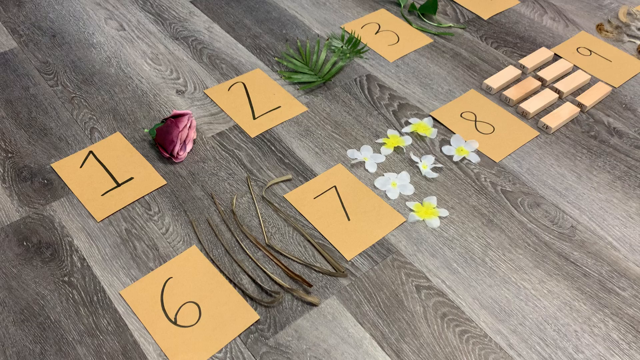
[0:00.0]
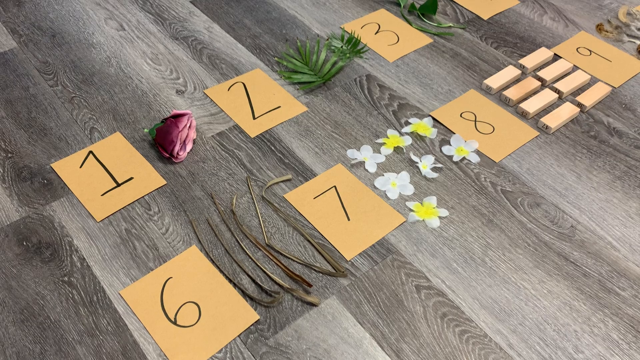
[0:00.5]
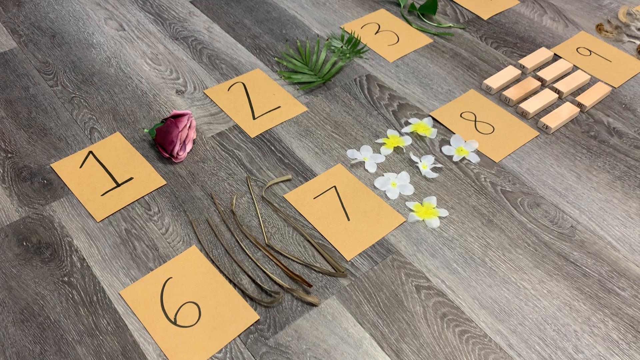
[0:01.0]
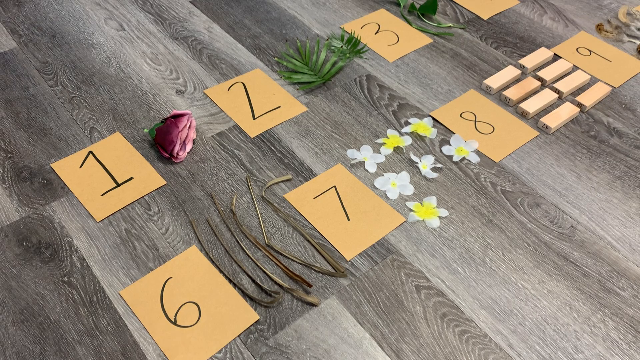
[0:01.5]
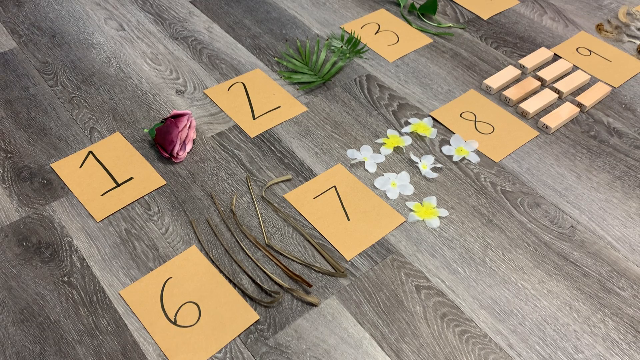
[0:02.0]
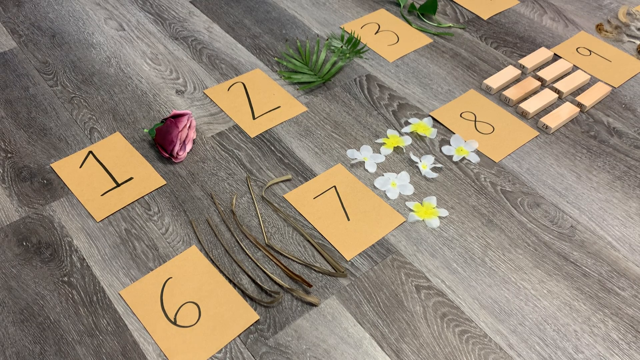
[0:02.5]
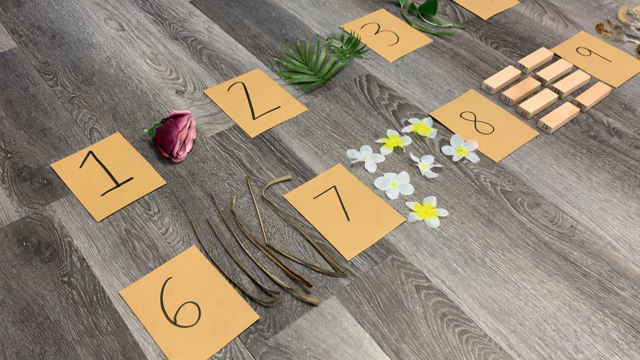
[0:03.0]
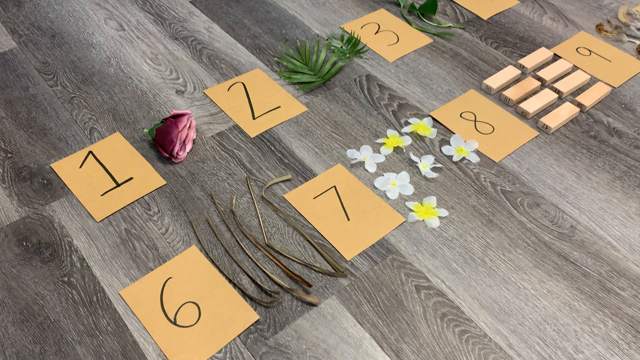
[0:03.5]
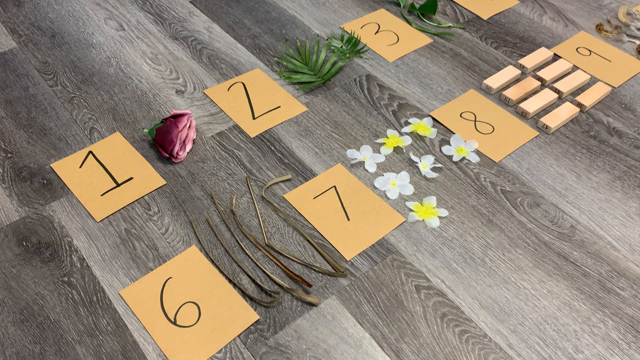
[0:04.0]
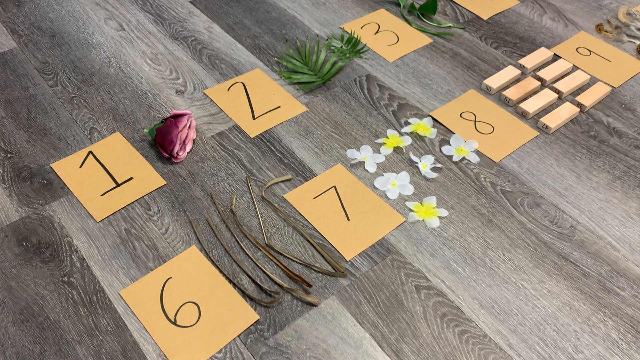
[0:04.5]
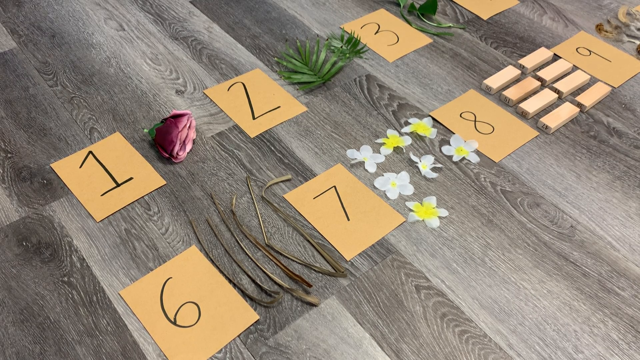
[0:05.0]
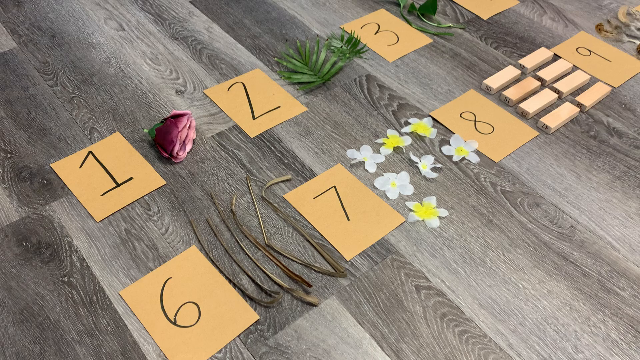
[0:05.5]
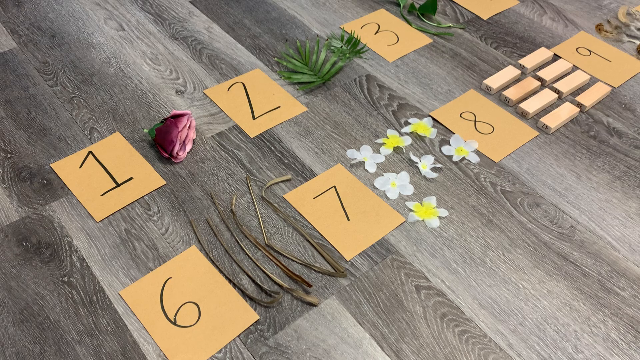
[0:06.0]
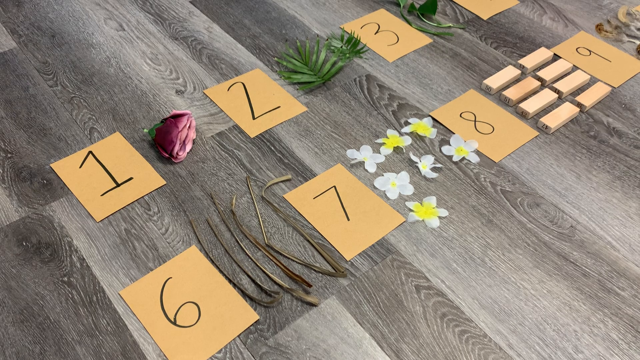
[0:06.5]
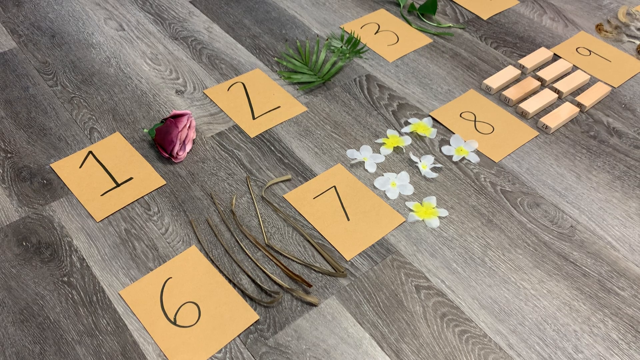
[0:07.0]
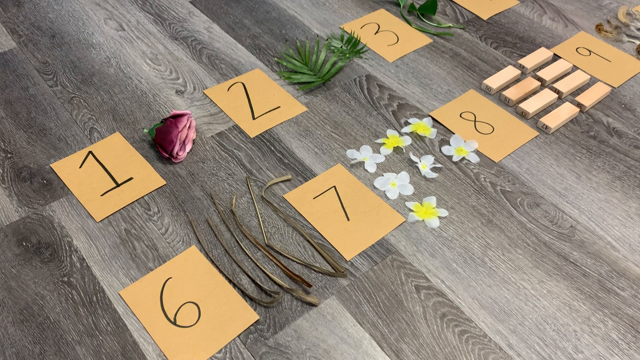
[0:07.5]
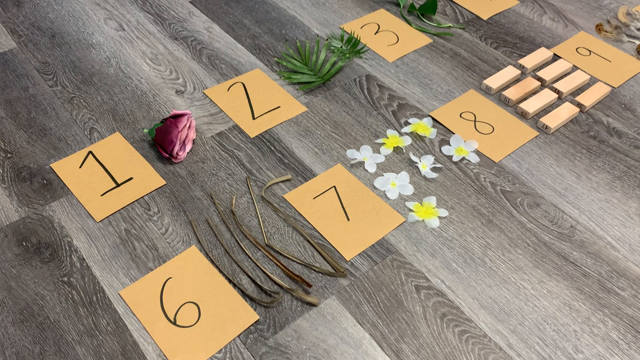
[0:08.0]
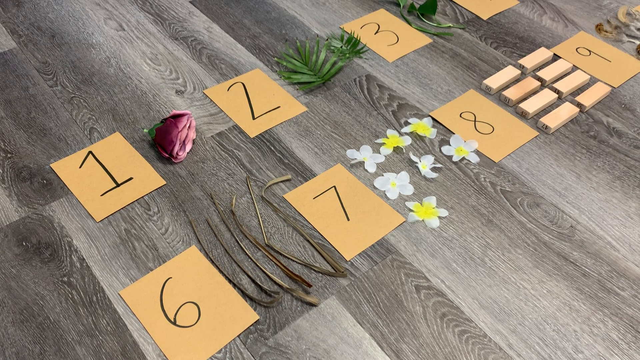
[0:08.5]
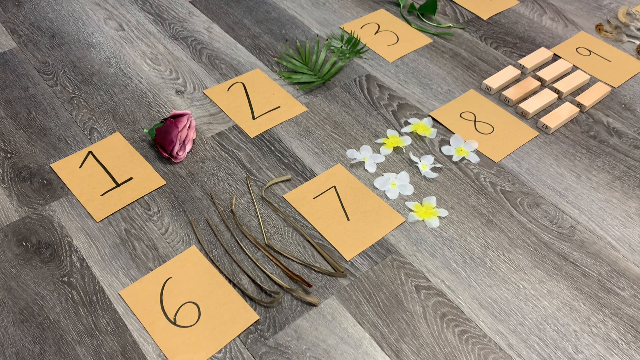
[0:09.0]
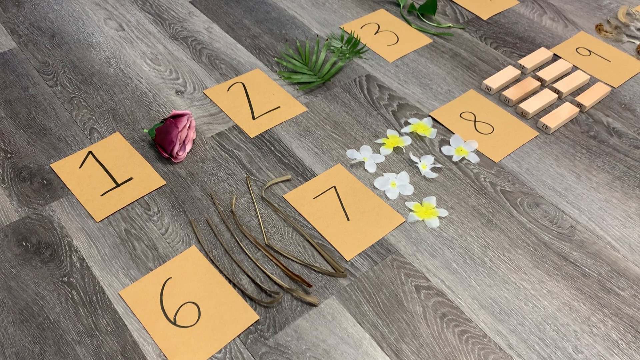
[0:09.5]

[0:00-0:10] A hardwood floor made of wood panelling holds what appear to be nine pieces of card numbered 1 to 9, though only cards 1, 2, 3, 6, 7, 8 and 9 are in the frame. Next to each card is a different item or group of items. Next to card 1 there seems to be the head of a rose in a dusky pink colour. Next to card 2 there are a couple of green leaves, apparently pine leaves, one bigger than the other. Next to card 3 there is some sort of green foliage, most of it out of the frame, so it is hard to tell exactly what it is. Next to card 6 there are six plant sticks of an unclear kind. Next to card 7 there are seven flower heads, possibly daffodils; just the heads of the flowers, some purely white and some with a yellow inside. Next to card 8 there are eight wooden blocks, all the same size. What is next to card 9 cannot be seen, as it is out of the shot.